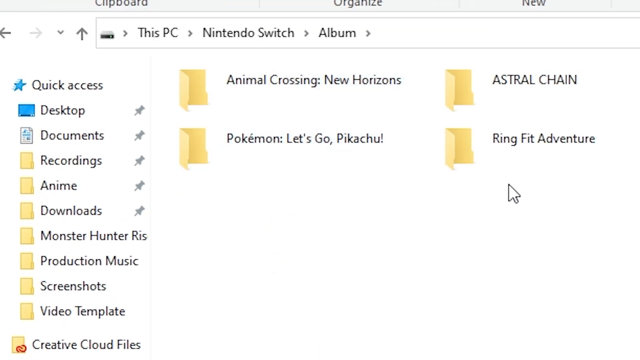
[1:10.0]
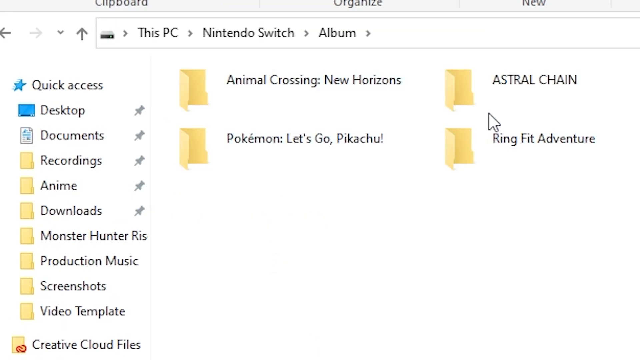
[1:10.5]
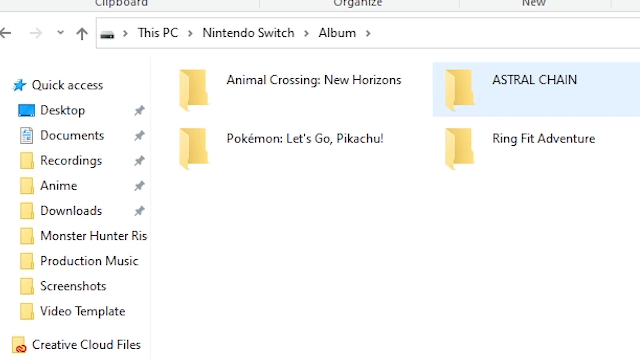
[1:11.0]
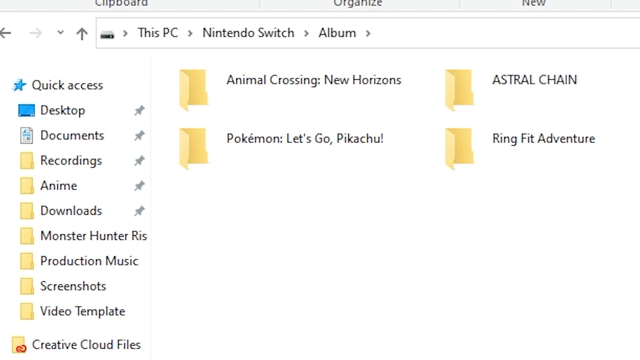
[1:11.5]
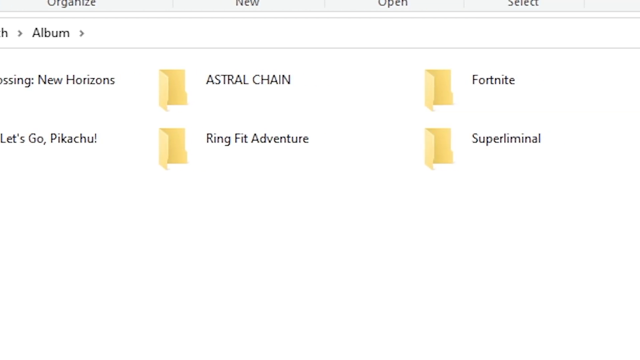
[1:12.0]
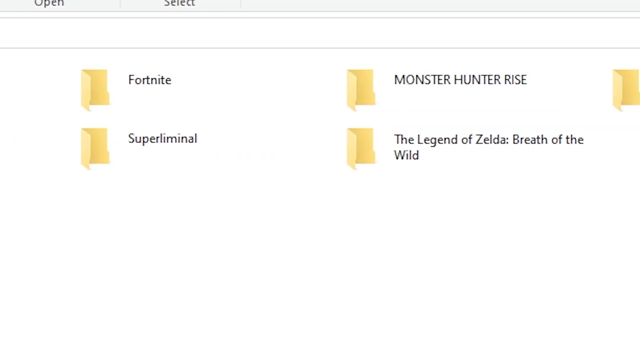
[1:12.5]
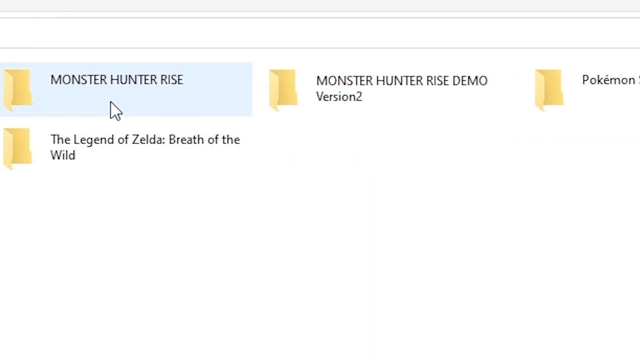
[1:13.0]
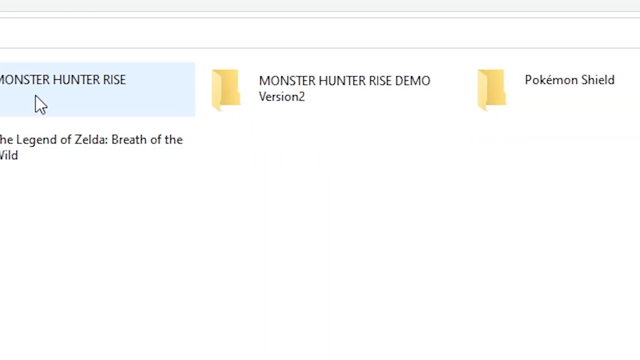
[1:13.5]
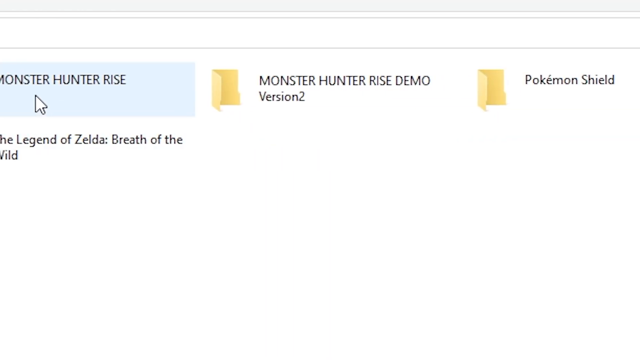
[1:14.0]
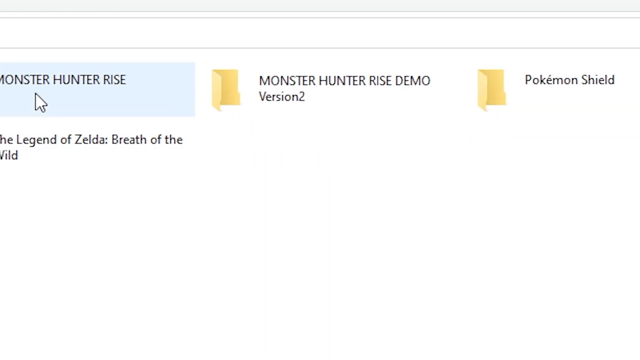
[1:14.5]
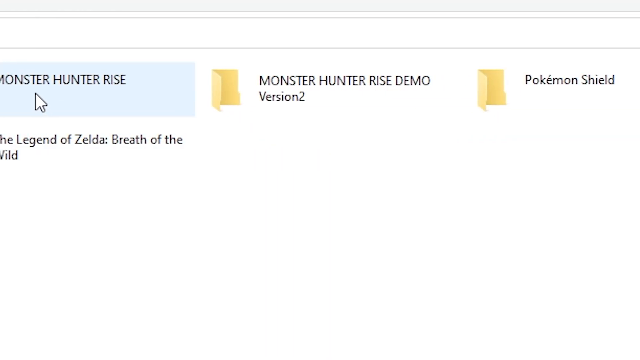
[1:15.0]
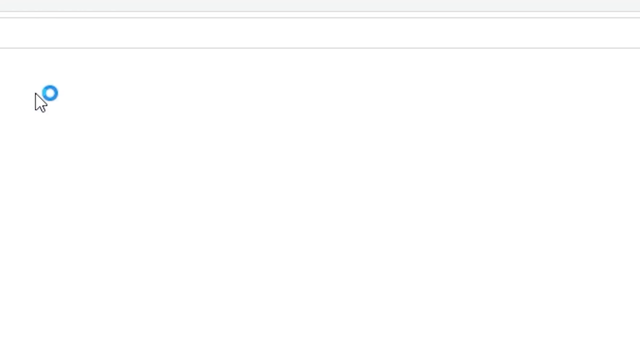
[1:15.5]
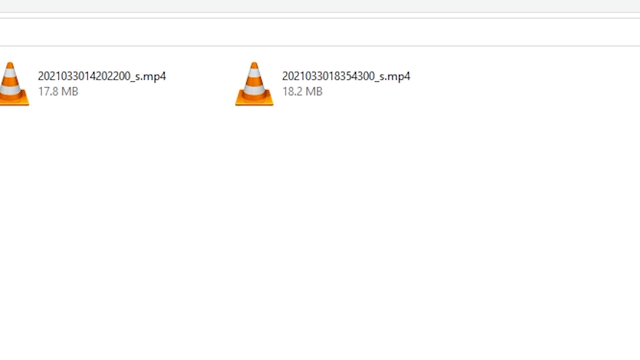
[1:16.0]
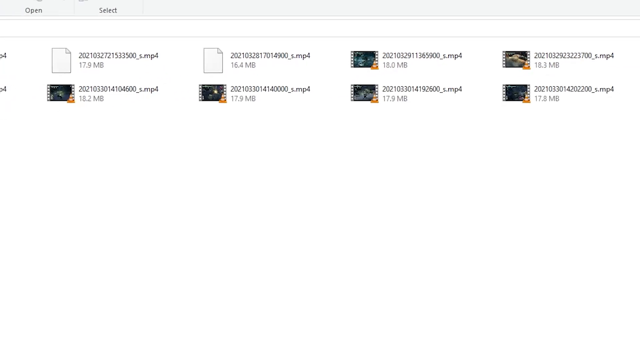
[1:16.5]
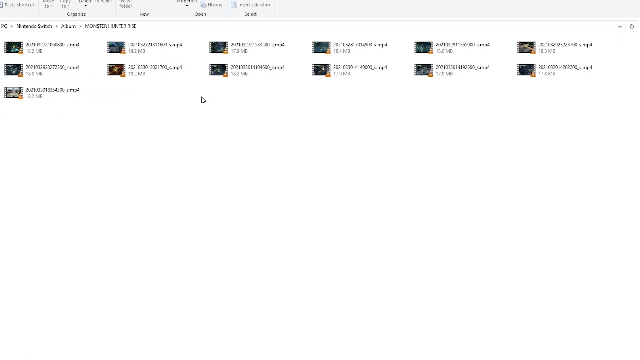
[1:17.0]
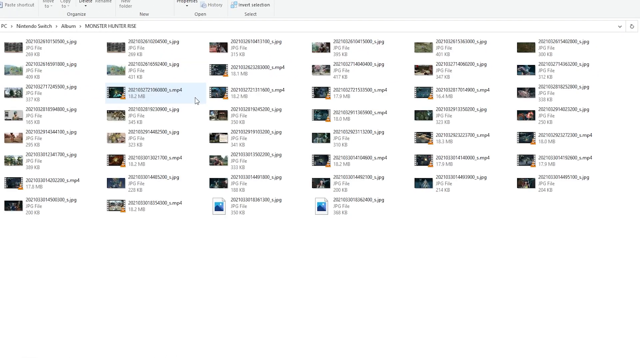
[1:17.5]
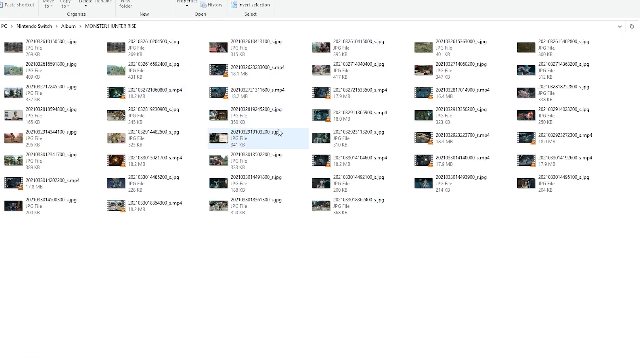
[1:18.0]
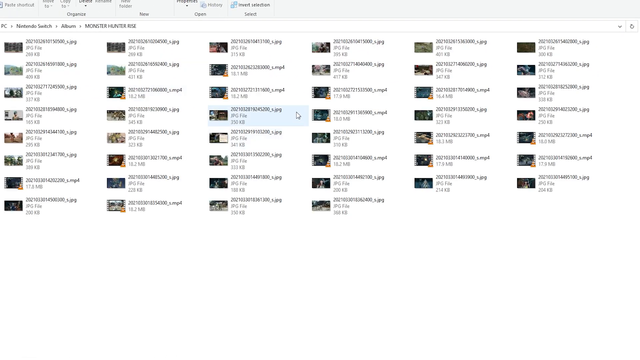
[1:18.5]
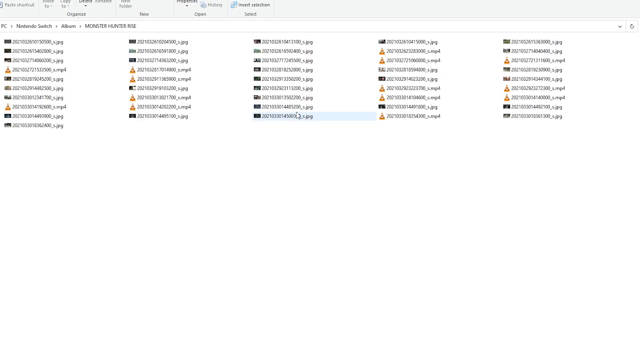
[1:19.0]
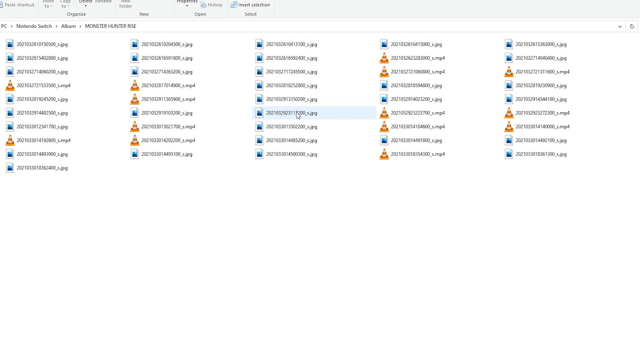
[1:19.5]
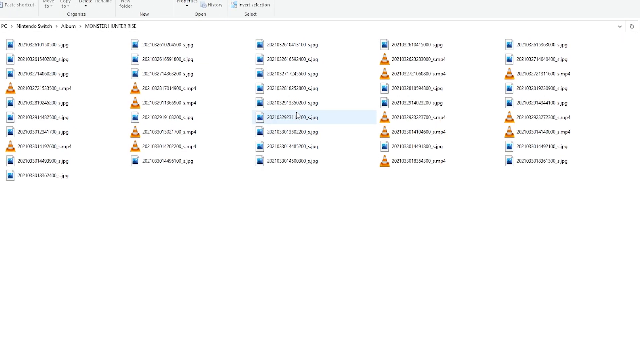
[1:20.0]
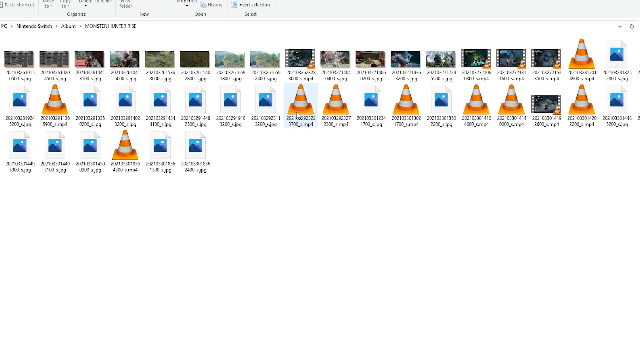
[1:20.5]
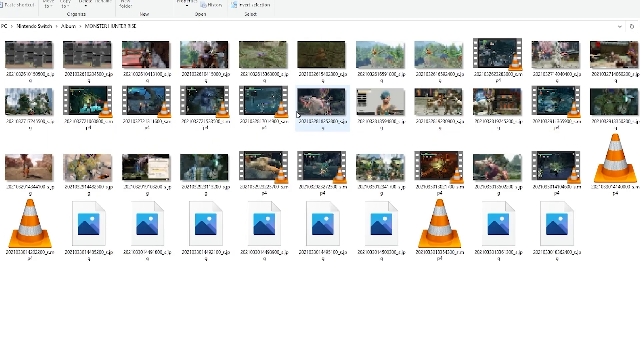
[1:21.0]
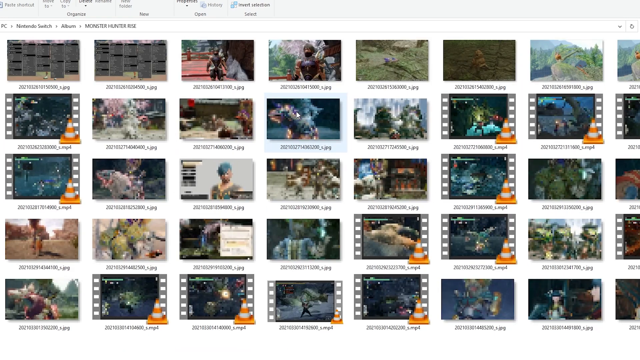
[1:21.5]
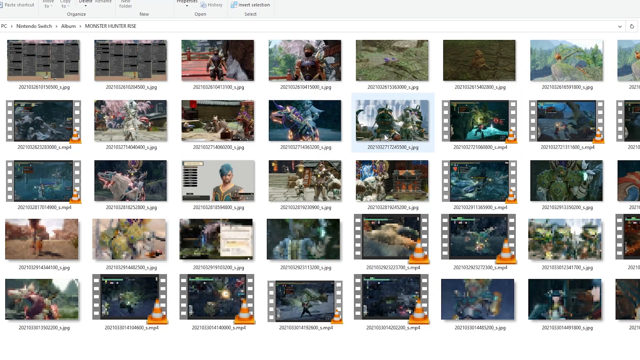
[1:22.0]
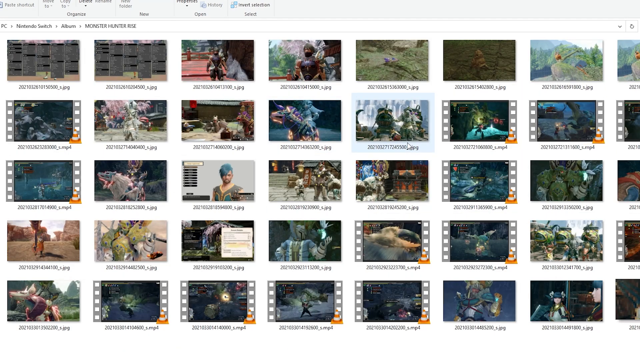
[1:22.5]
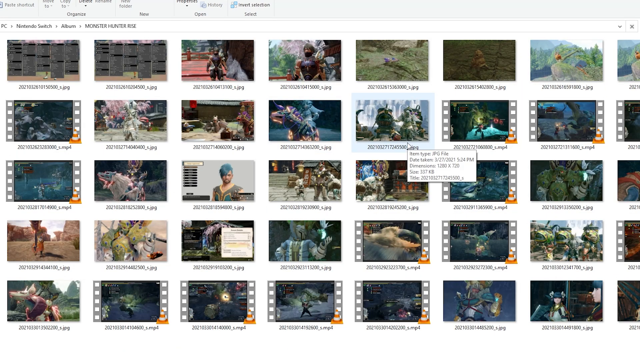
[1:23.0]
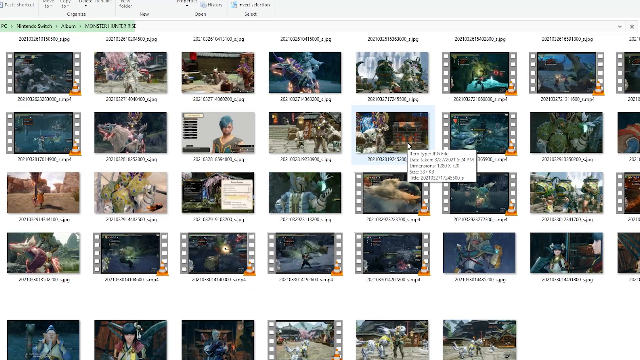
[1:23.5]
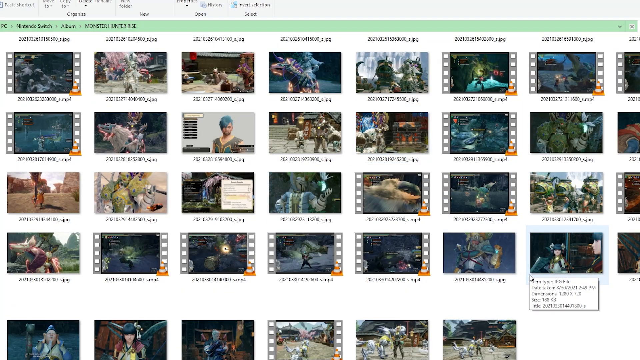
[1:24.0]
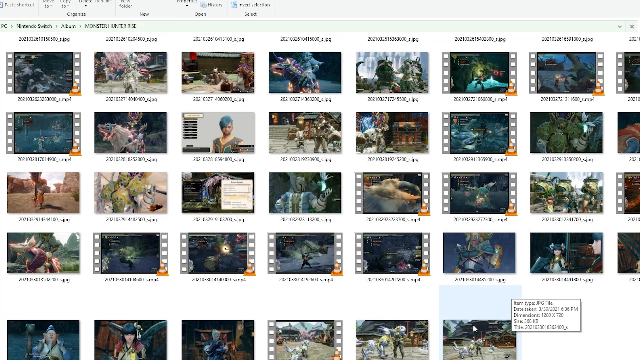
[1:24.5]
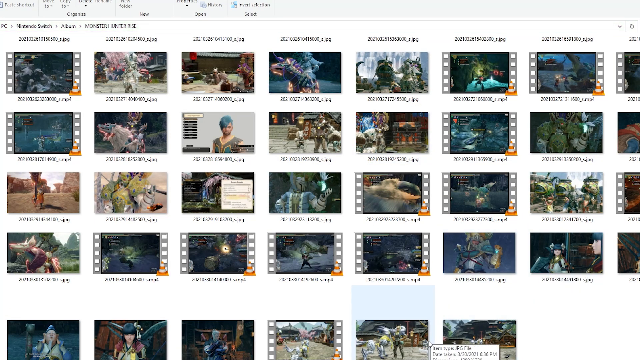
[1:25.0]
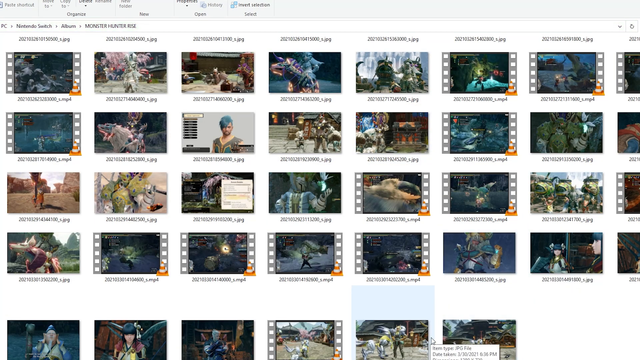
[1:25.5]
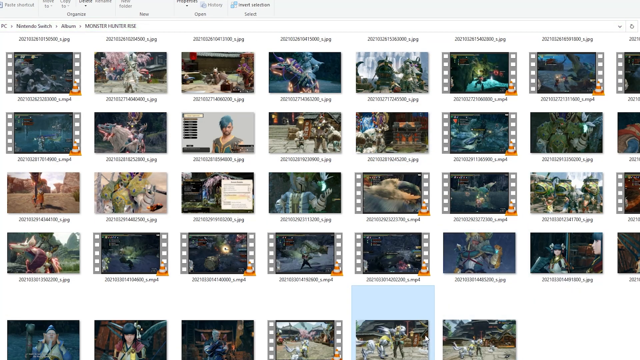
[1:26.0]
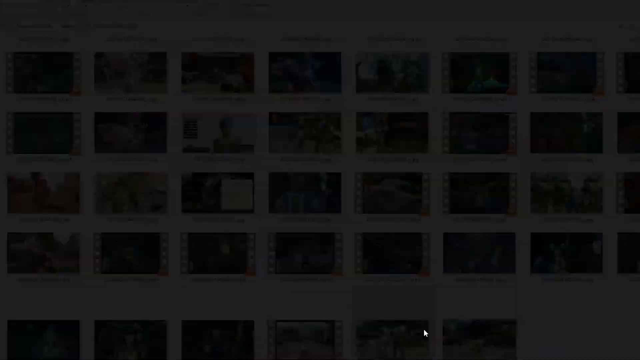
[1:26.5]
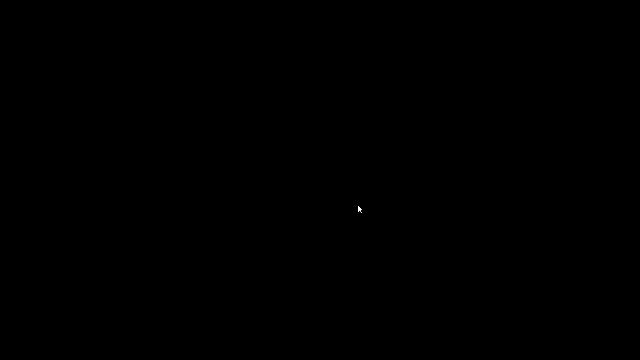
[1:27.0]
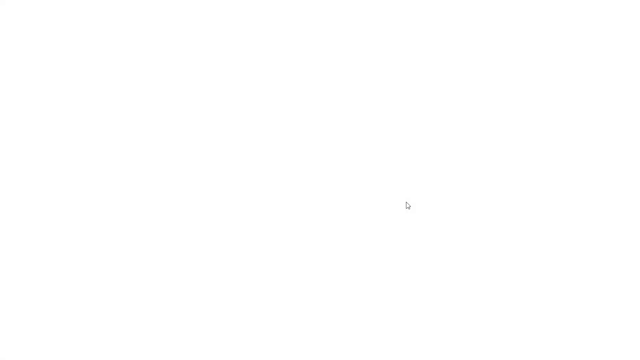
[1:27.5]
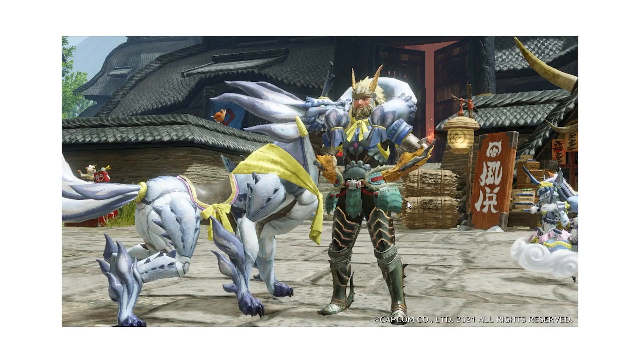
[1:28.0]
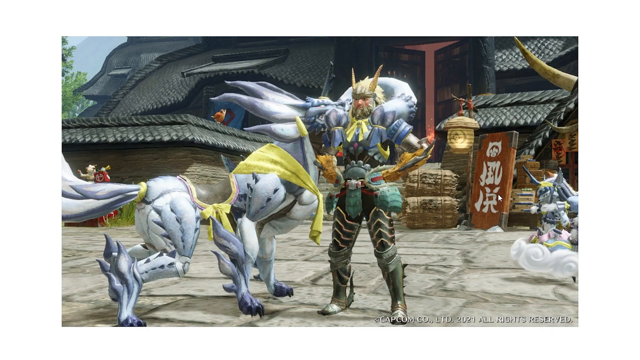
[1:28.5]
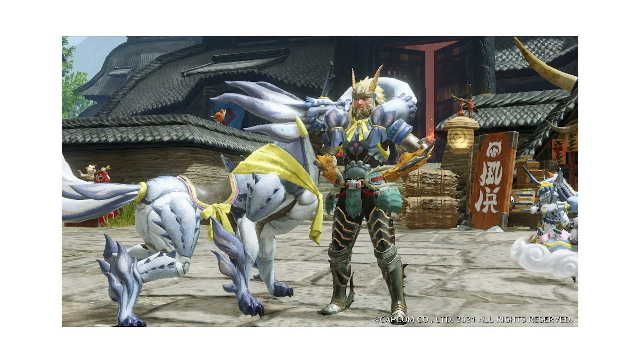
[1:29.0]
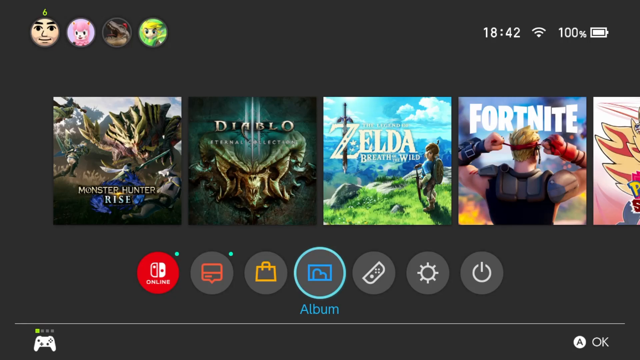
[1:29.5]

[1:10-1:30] The folders are a variety of game folders. Scrolling through them shows Animal Crossing New Horizons, Astral Chain, Pokemon Let's Go Pikachu, Ring Fit Adventure, Fortnite, Superliminal, Monster Hunter Rise, The Legend of Zelda Breath of the Wild, Monster Hunter Demo, and Pokemon Shield. The user clicks the Monster Hunter folder to open it and a variety of files populate; some appear to be JPEG pictures and others mp4 videos captured by the player. The user scrolls and makes the thumbnails smaller at first, then makes them much bigger. They highlight one and click it, and the image opens filling the screen: a picture of the character seen earlier jumping around the town, standing alongside the pet.